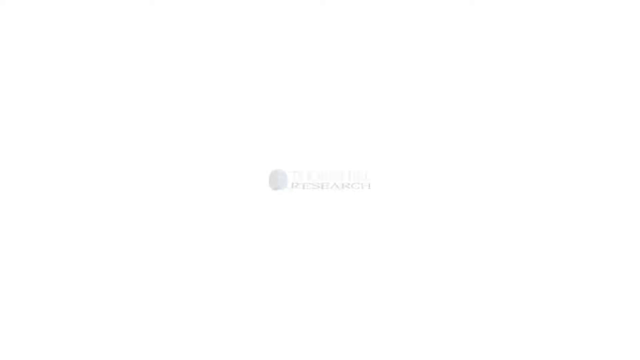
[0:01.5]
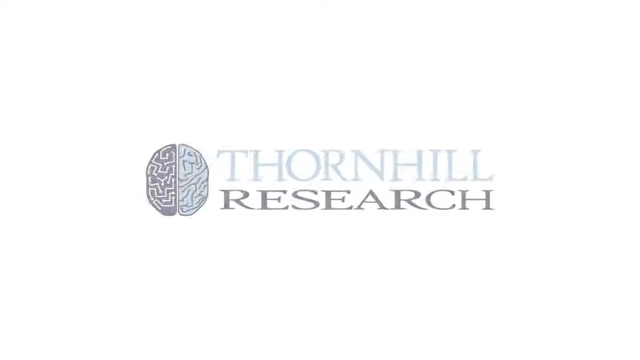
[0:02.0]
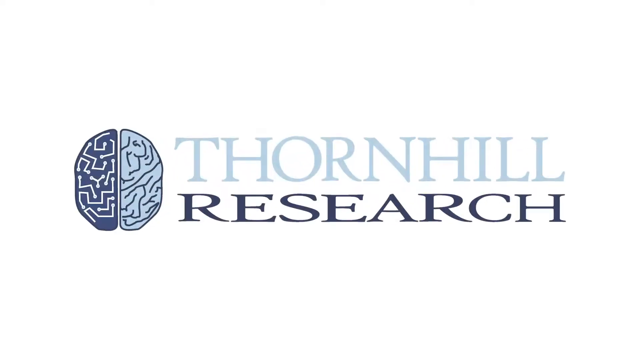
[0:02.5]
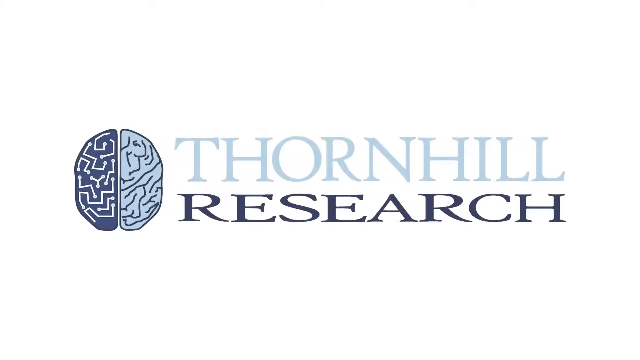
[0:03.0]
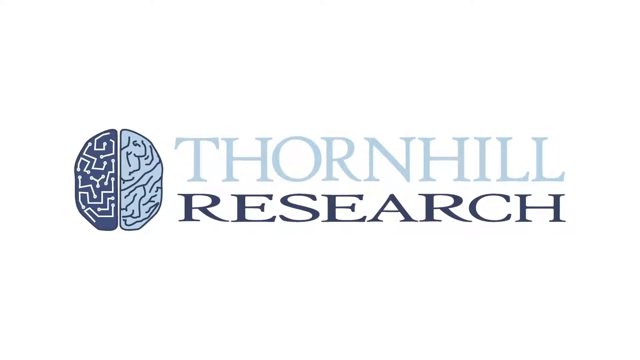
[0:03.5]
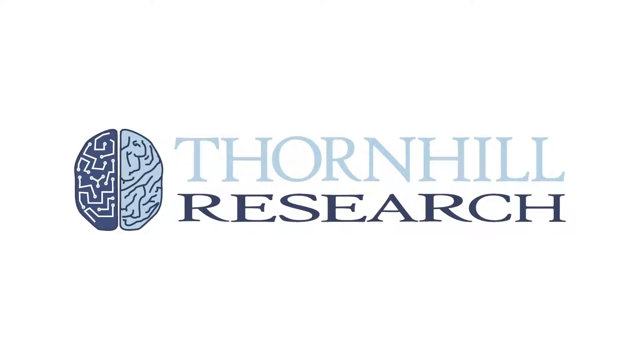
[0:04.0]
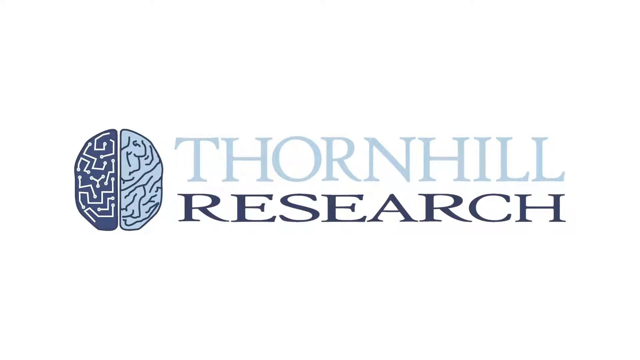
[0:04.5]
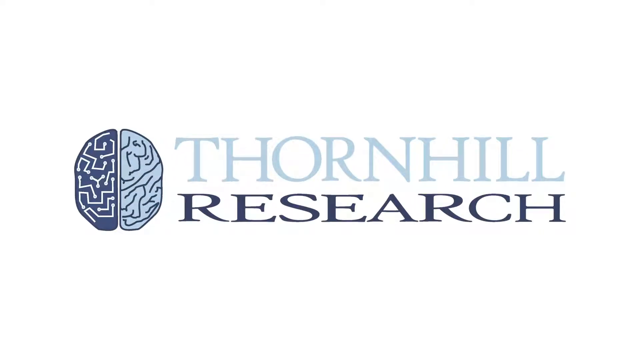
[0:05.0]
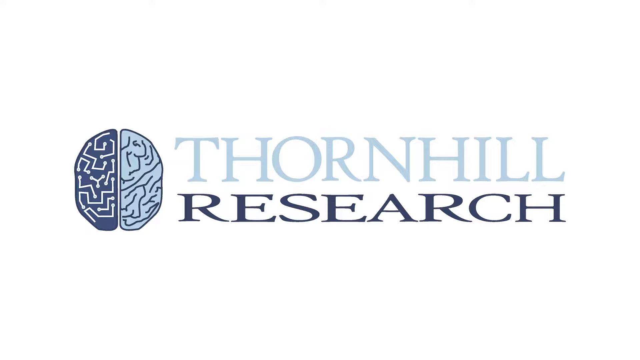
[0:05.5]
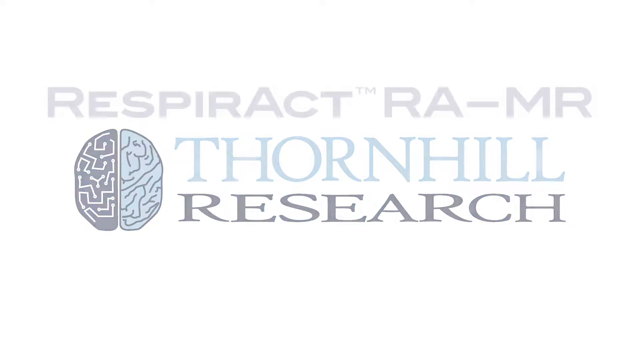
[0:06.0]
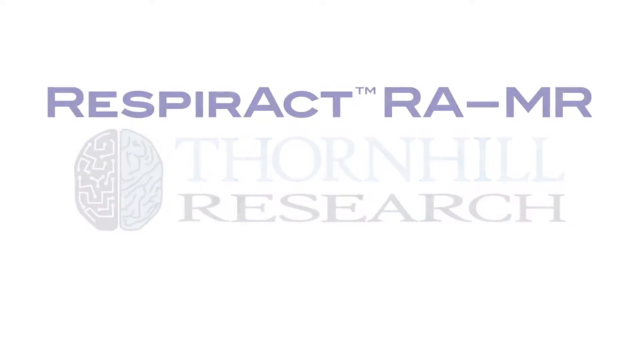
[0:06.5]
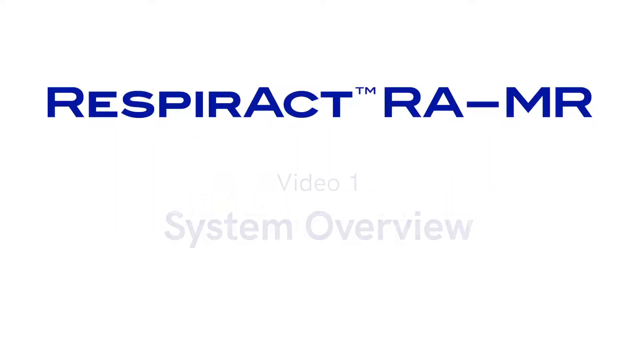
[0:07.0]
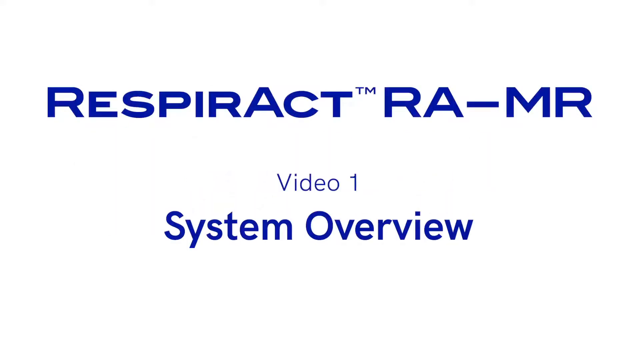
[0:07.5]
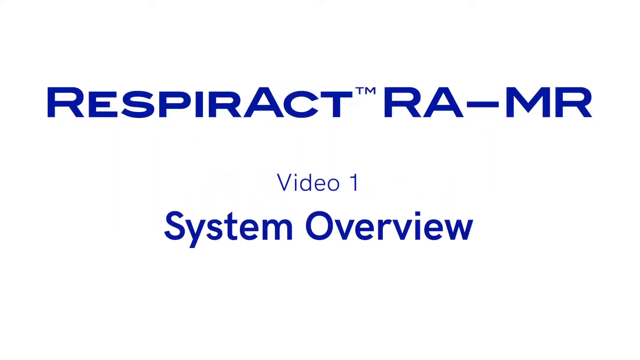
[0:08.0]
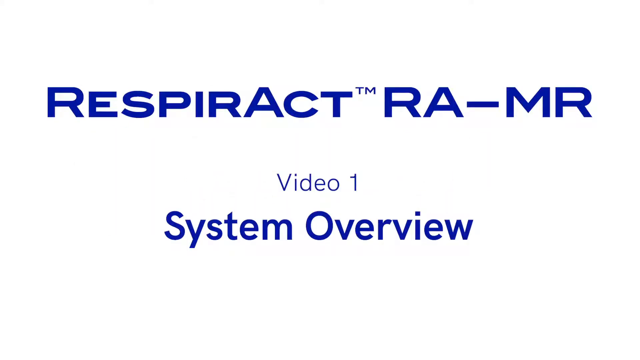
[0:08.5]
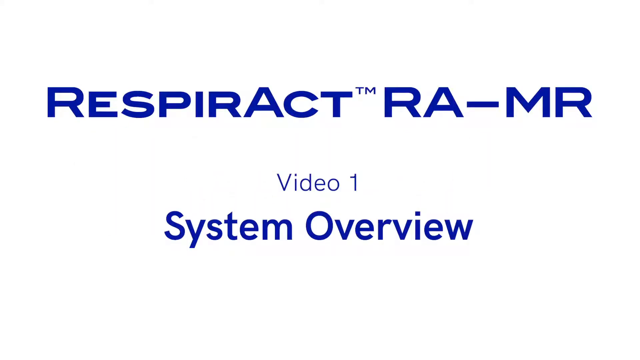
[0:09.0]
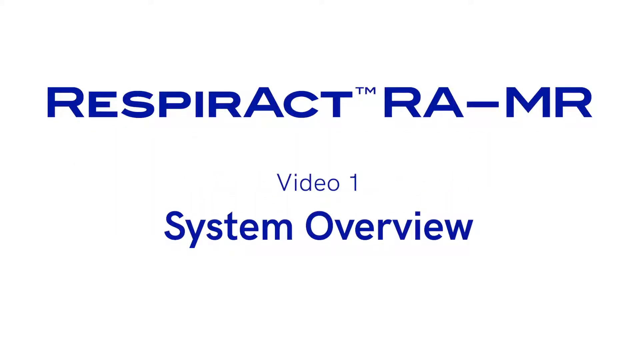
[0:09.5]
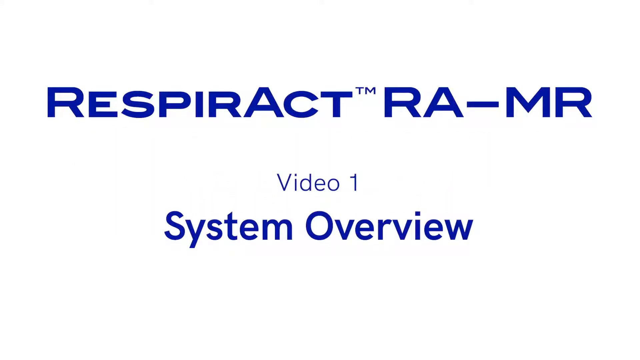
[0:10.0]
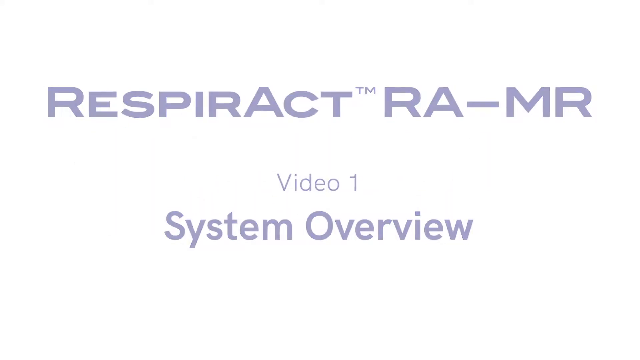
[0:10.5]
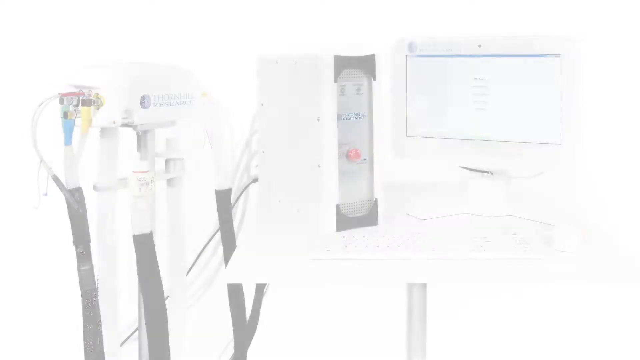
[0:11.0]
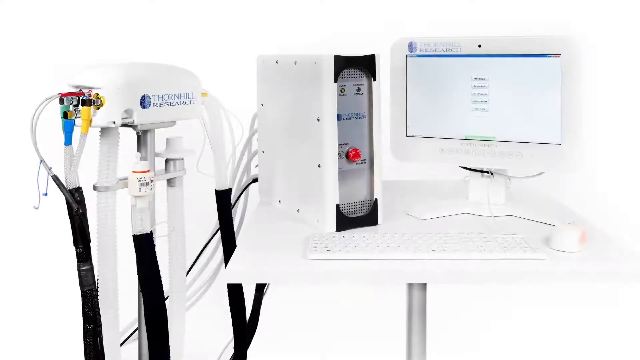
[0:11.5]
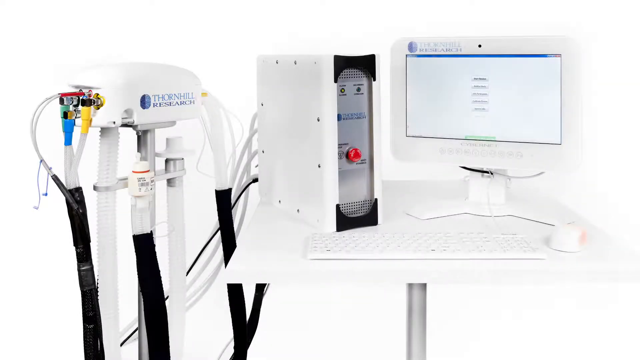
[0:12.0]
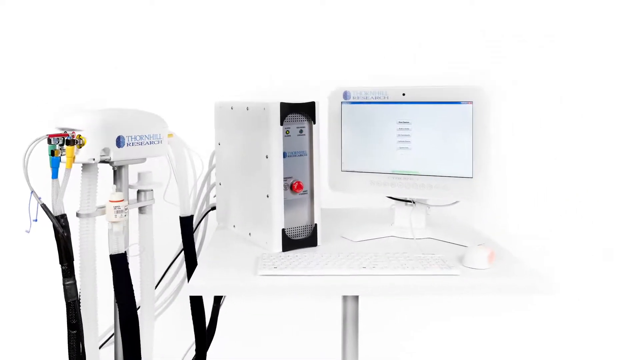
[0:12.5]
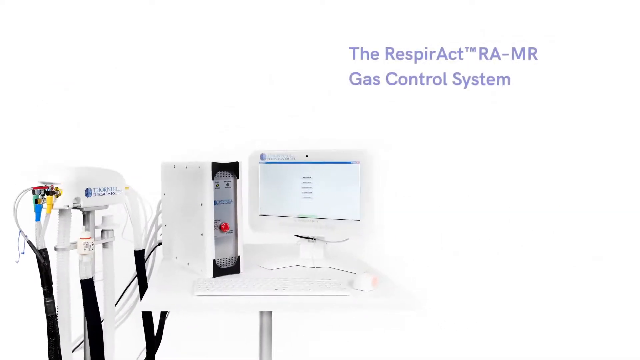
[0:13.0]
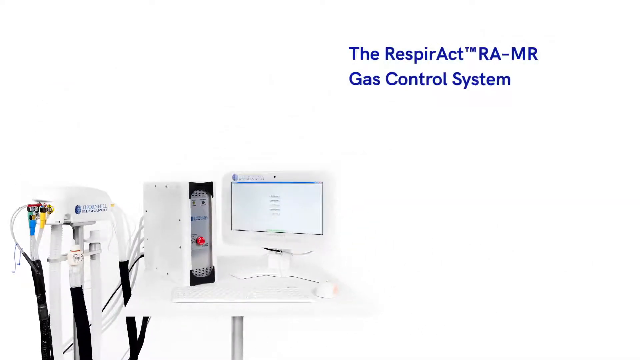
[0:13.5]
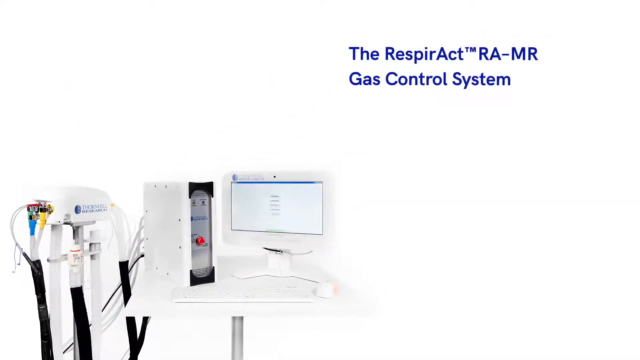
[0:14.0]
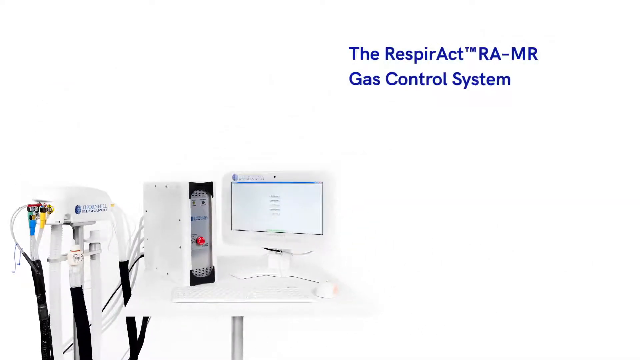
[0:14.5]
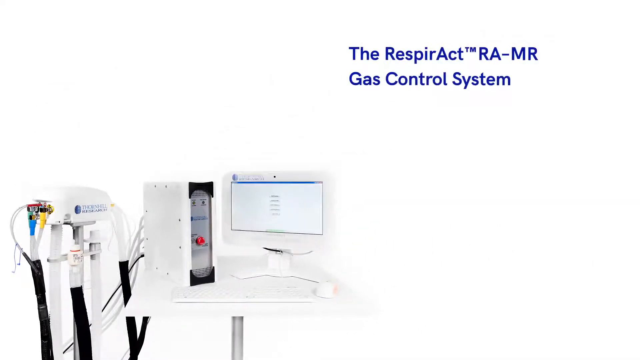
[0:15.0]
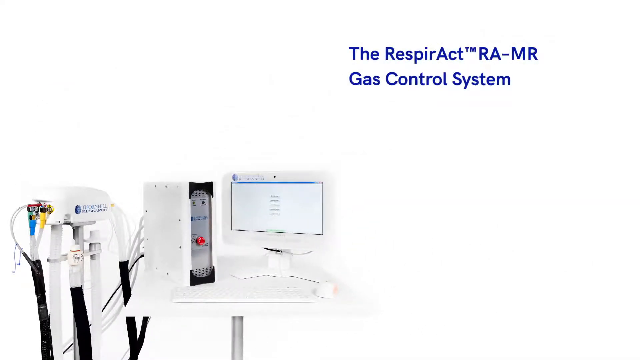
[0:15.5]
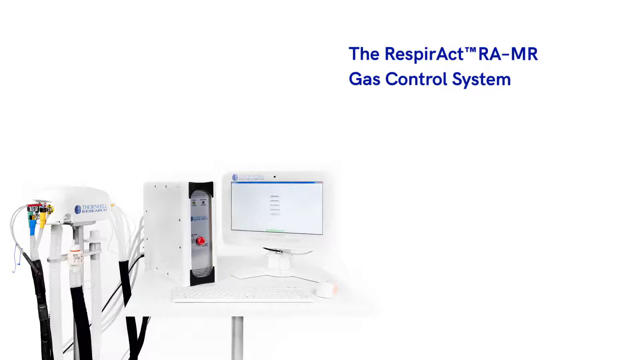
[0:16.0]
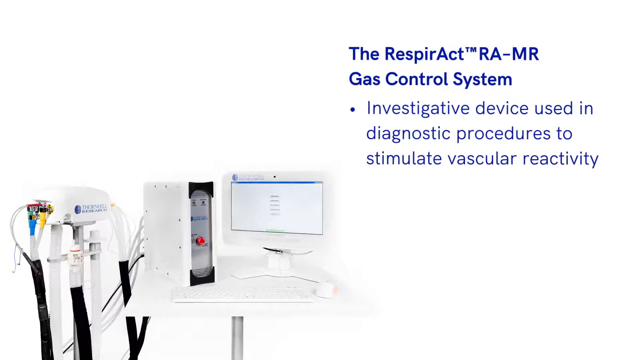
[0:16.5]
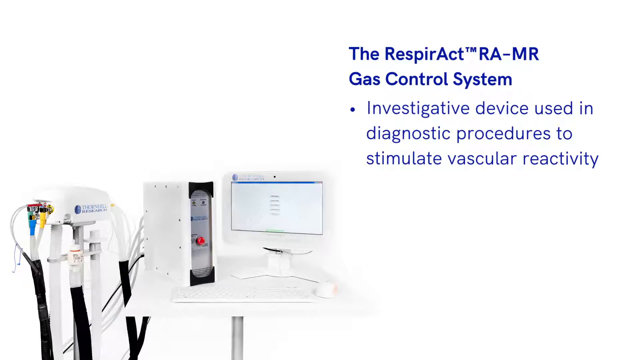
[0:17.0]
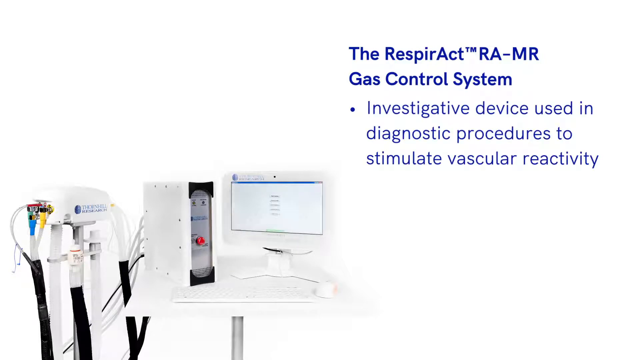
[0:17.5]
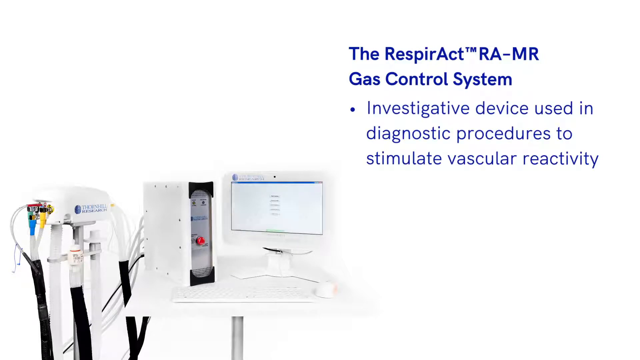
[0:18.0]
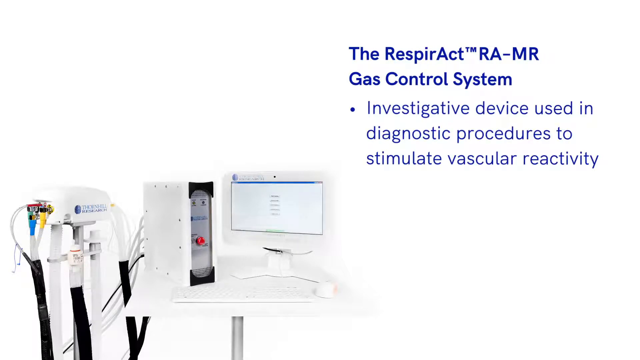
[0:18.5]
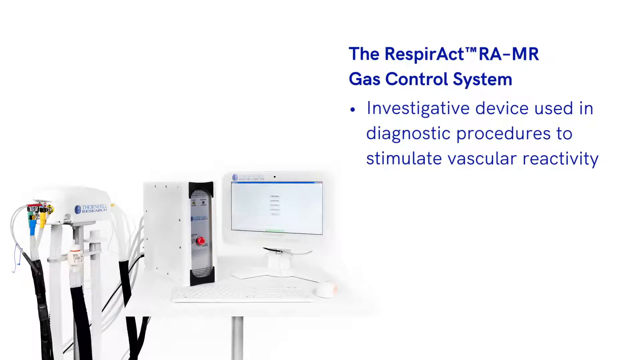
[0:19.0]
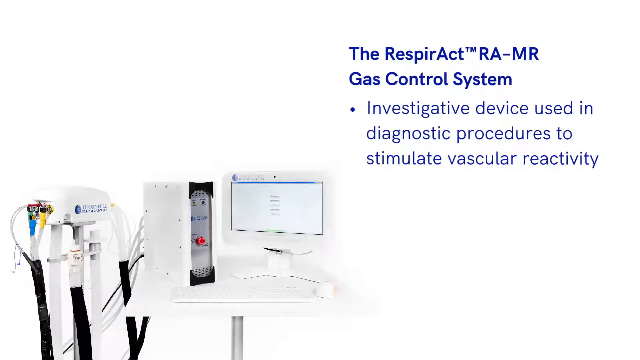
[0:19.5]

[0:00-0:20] The video opens with the "Thornhill Research" name, with "Thornhill" in blue and "Research" in black; to the left of it is a brain divided into blue and black. Next appears "Respiract RA-MR Video 1 System Overview." The equipment, the Respiract, is then shown with Thornhill Research on it. Text follows: "the Respiract RAMR gas control system. This is an investigative device used in the diagnostic procedures to stimulate vascular reactivity."